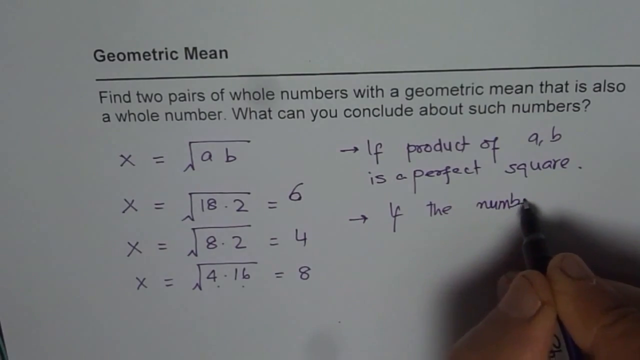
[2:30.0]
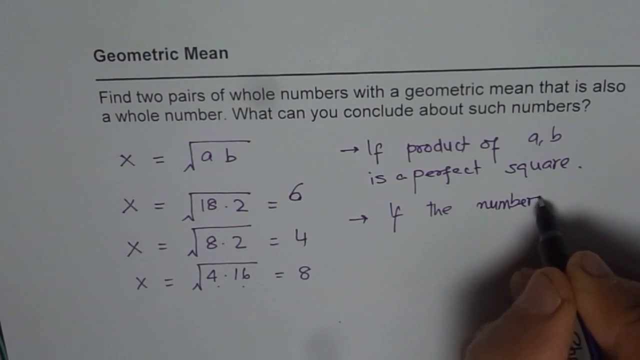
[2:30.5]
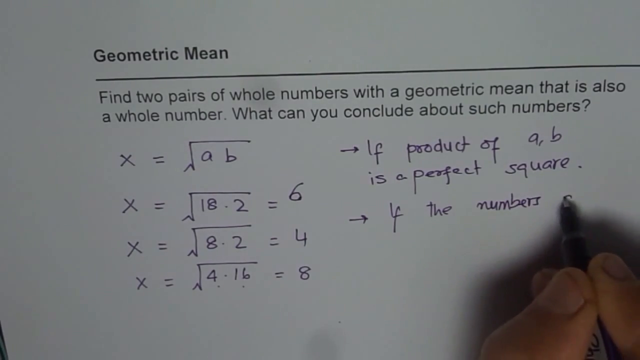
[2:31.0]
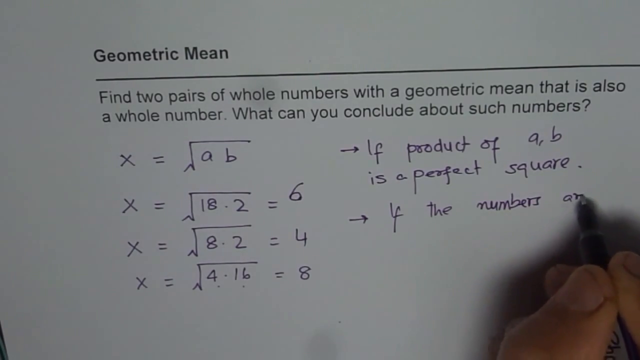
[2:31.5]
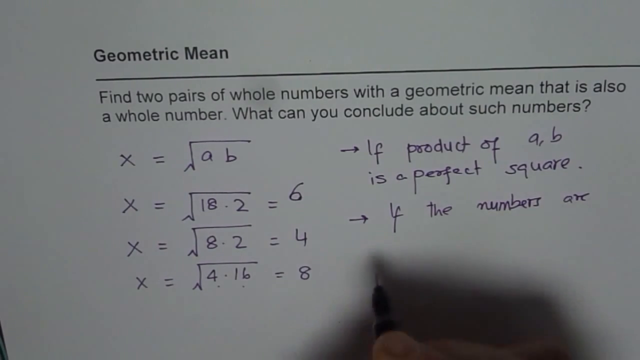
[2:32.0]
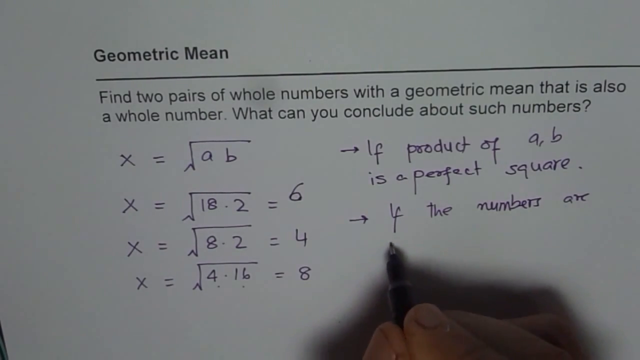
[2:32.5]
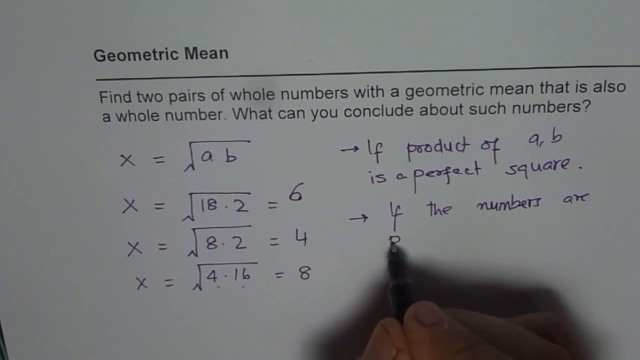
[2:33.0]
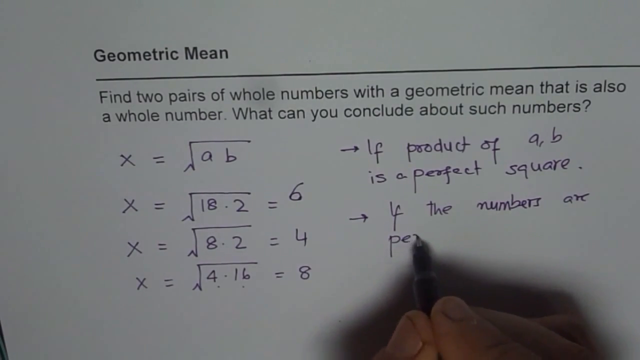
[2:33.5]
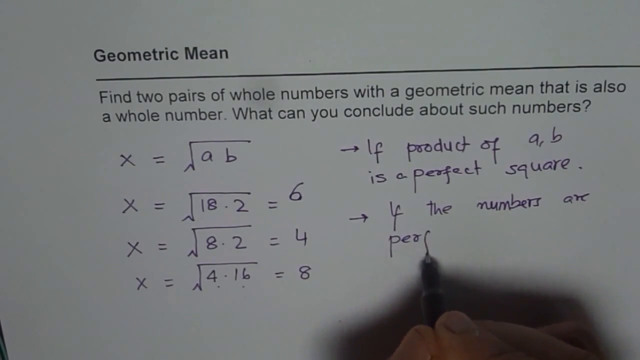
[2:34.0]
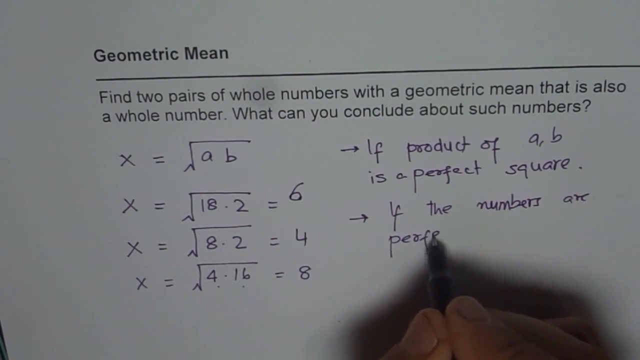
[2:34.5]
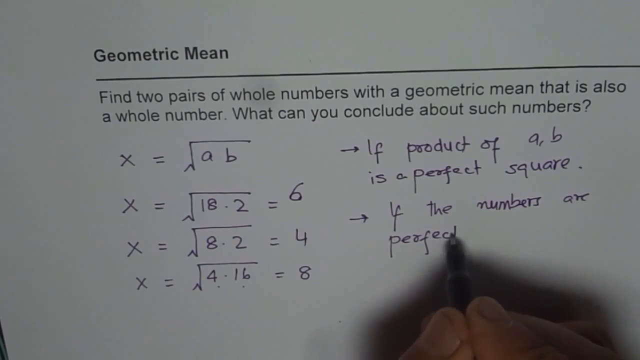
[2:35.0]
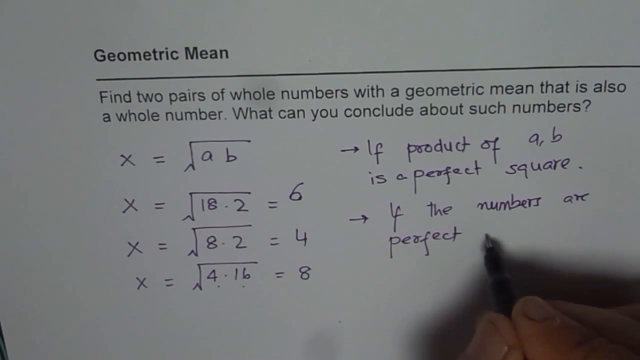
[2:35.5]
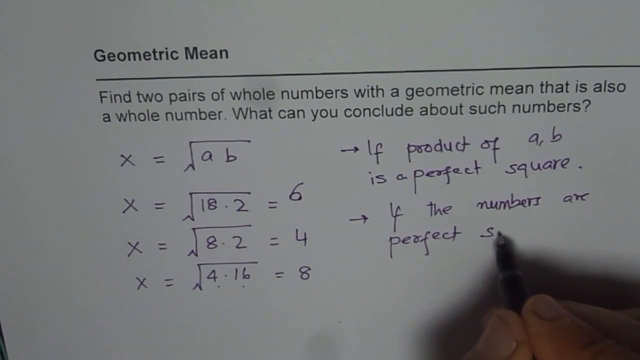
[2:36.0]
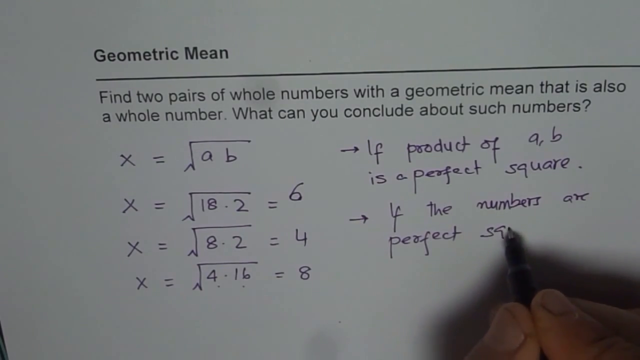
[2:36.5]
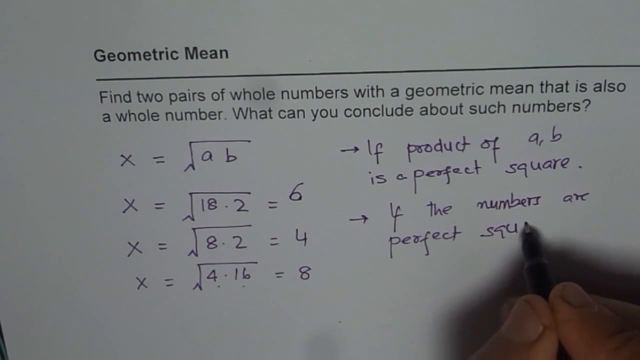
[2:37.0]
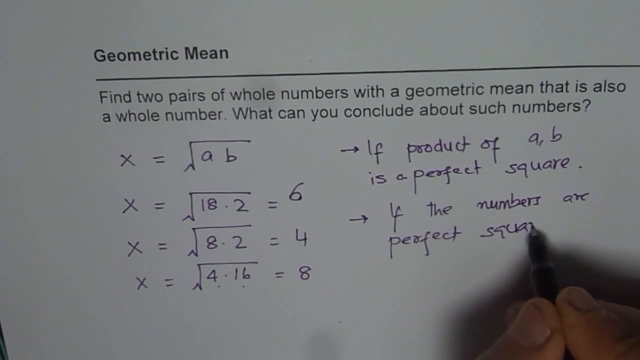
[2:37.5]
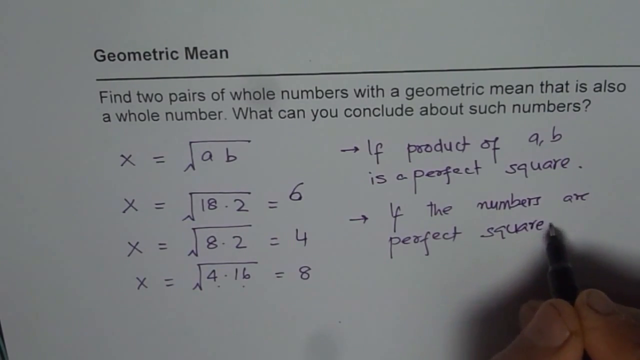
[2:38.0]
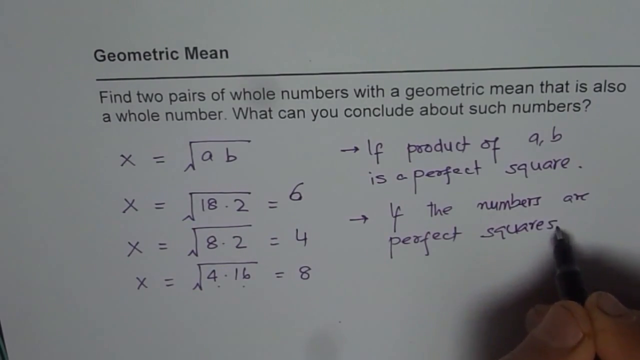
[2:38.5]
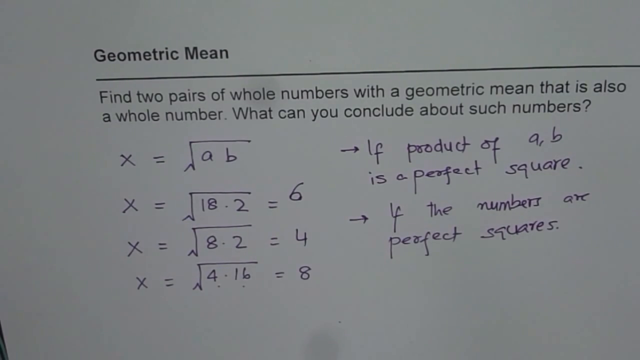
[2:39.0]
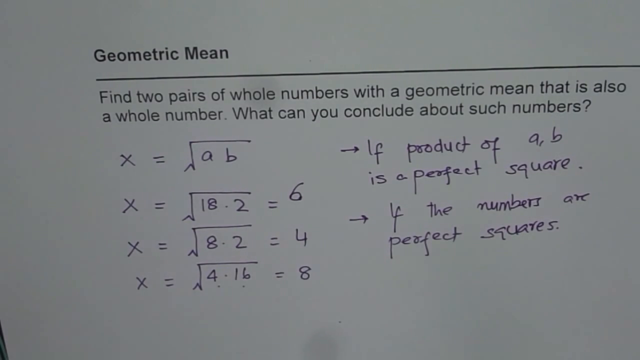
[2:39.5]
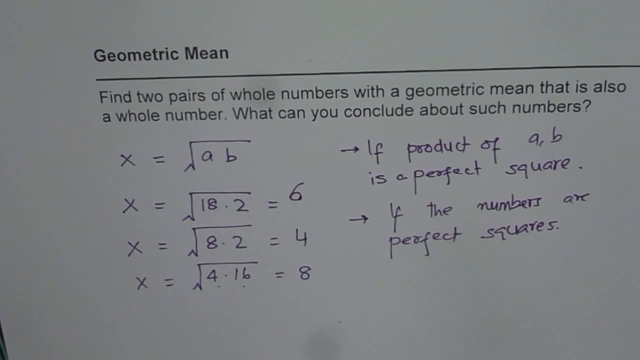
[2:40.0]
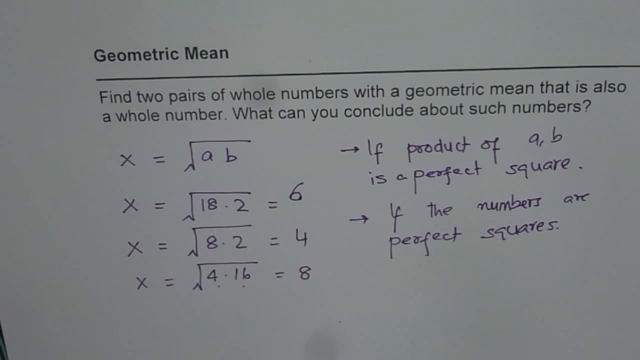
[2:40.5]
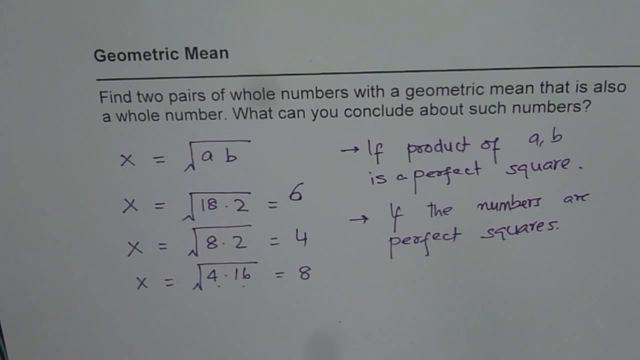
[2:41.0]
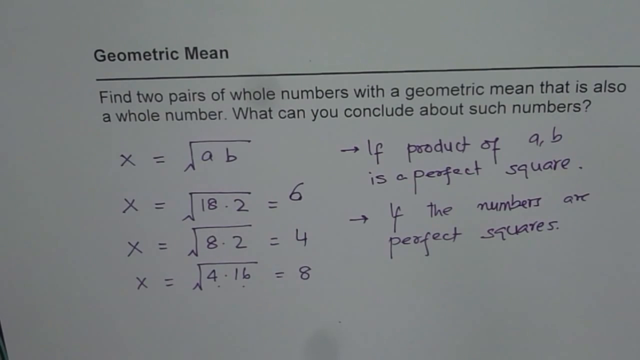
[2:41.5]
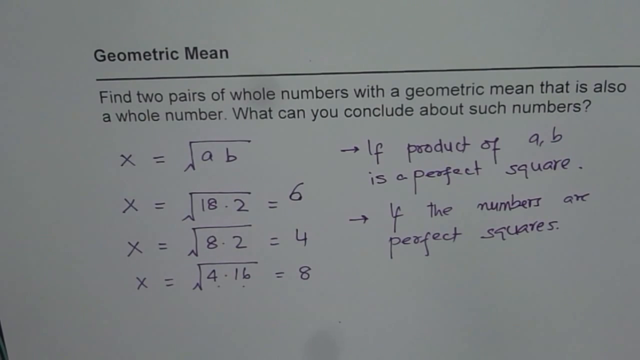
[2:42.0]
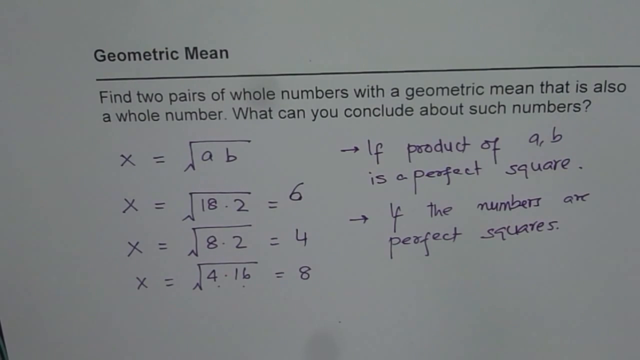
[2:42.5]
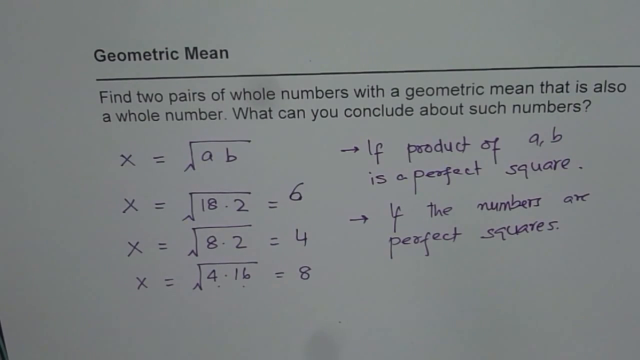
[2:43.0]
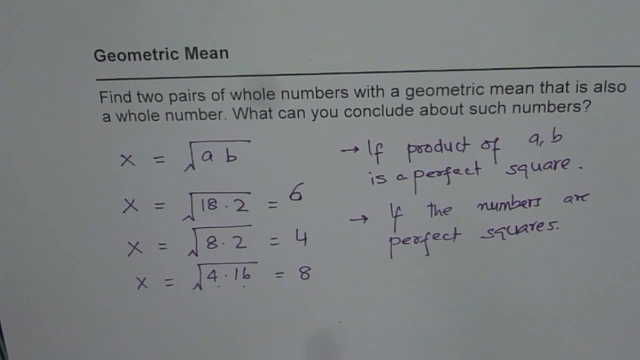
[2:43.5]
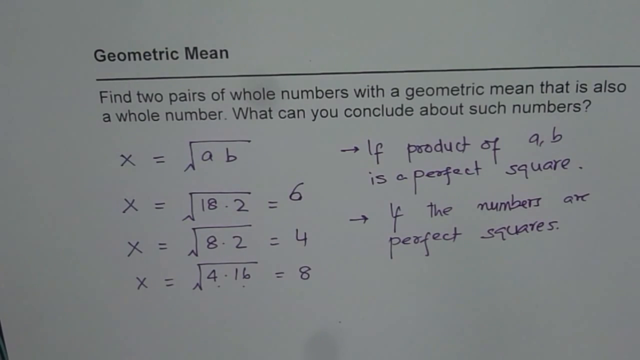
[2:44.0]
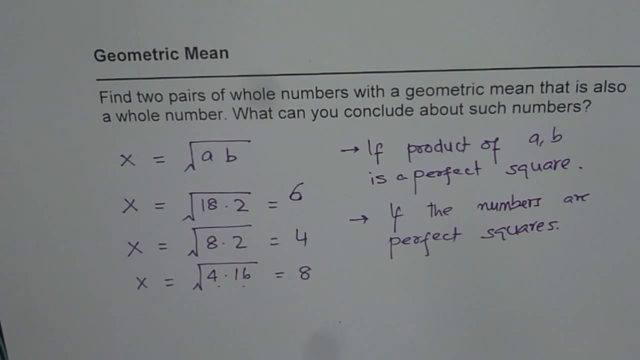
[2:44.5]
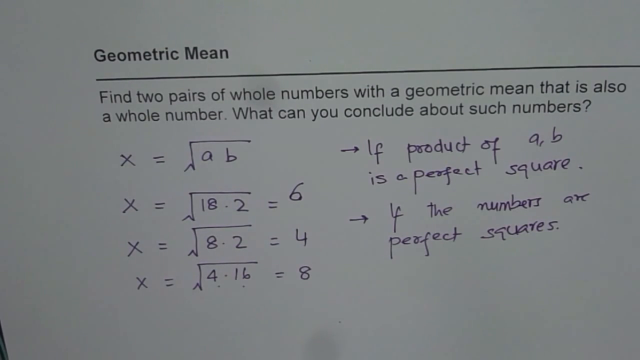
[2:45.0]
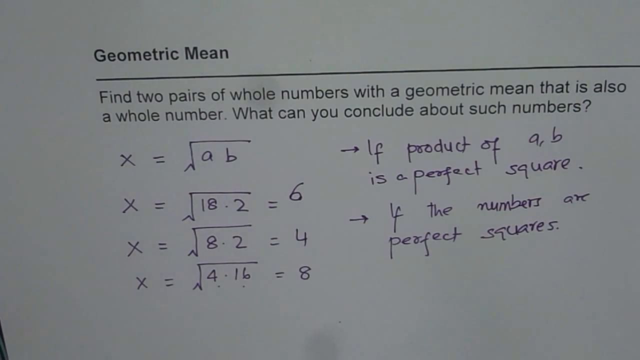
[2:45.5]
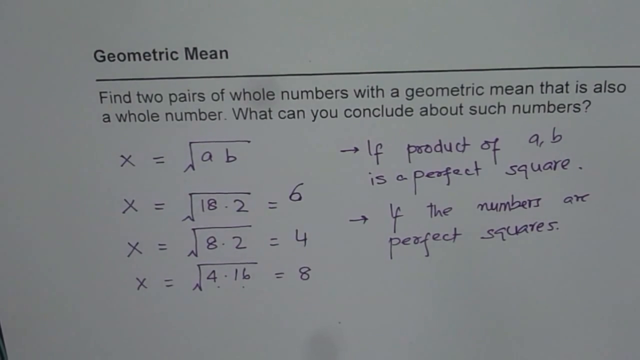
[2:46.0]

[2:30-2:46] The man continues writing, then pulls his hand off the paper to the right, leaving the equations visible on the left of the white paper. Dots are left where he tapped the paper under the numbers. The words "geometric mean" are in the upper left-hand corner in black bold writing, with a solid black line underneath that extends all the way off the right-hand side of the screen. Less bold black printing under the line reads "find two pairs of whole numbers" and "What can you conclude about such numbers?" To the right of the equations is the cramped but neat writing, and below that is "if the numbers are perfect squares", with the equations he wrote to the left of it.